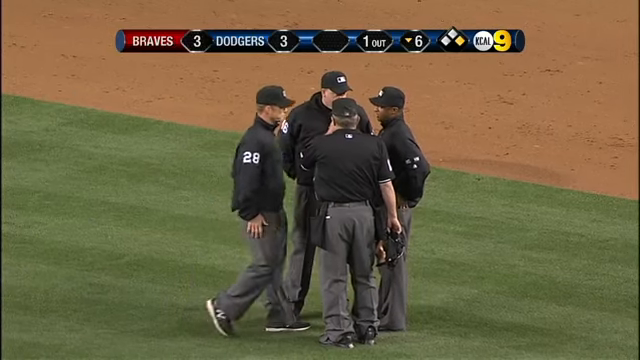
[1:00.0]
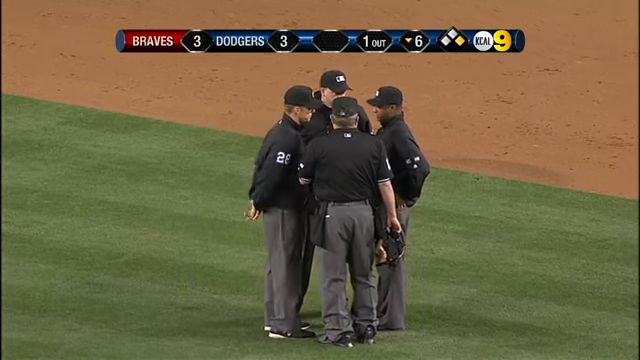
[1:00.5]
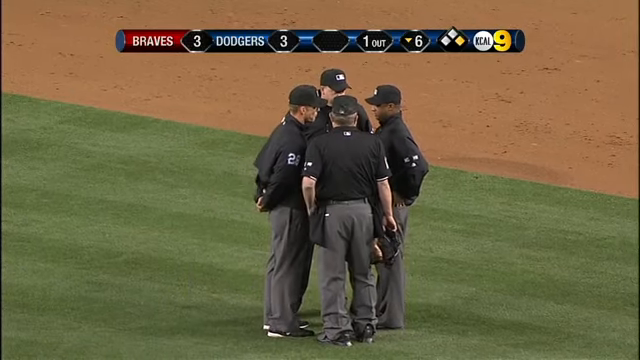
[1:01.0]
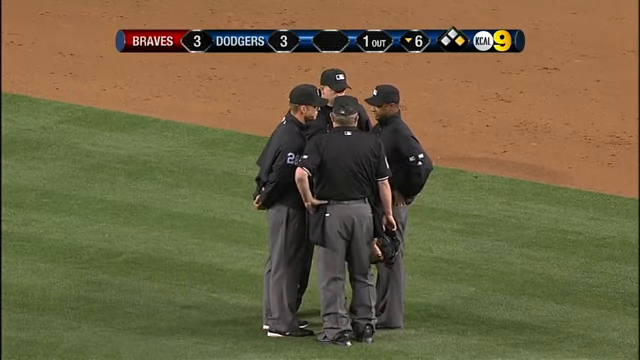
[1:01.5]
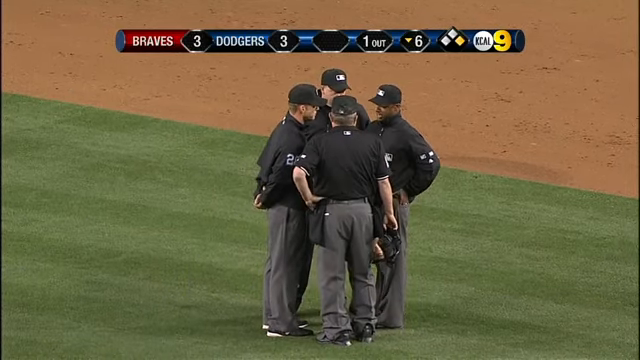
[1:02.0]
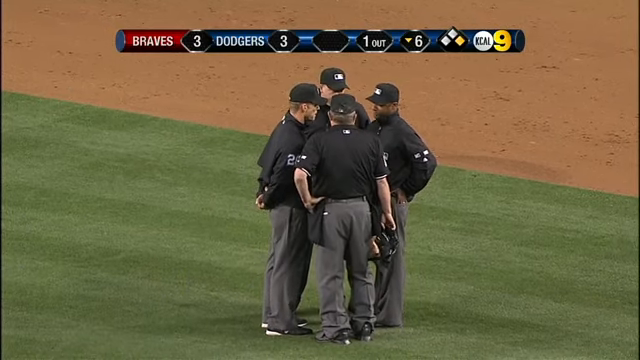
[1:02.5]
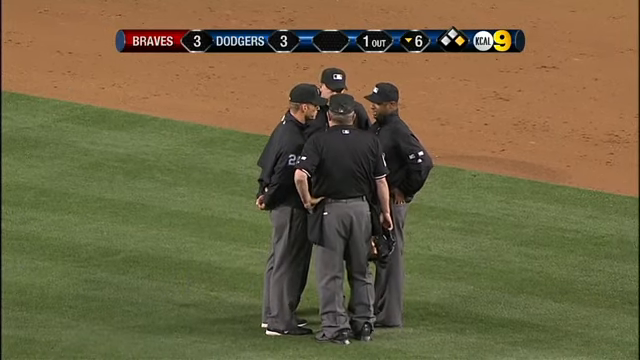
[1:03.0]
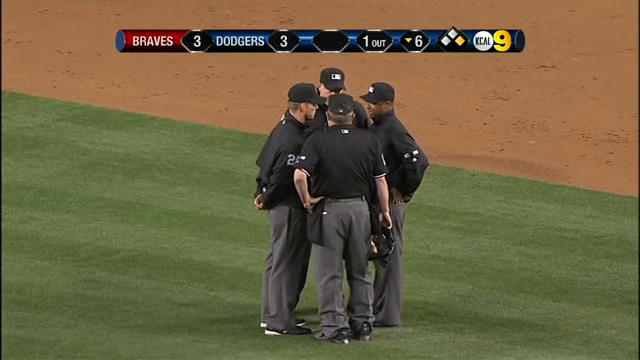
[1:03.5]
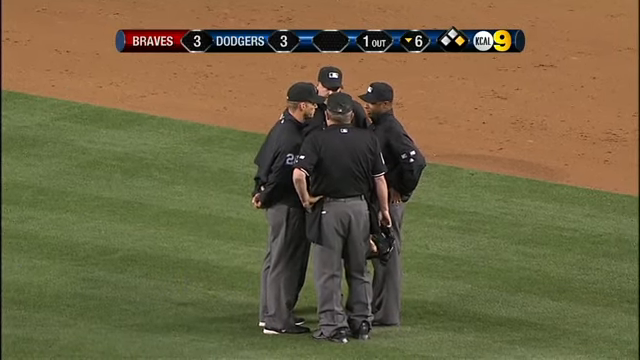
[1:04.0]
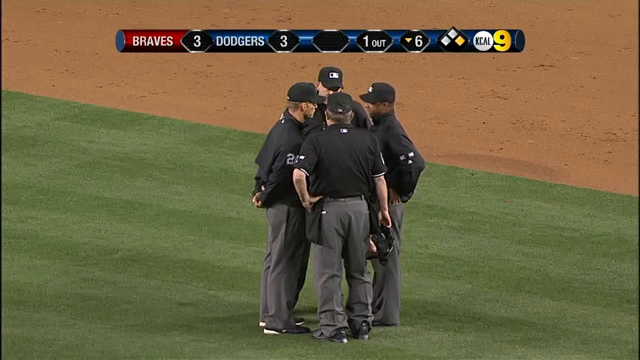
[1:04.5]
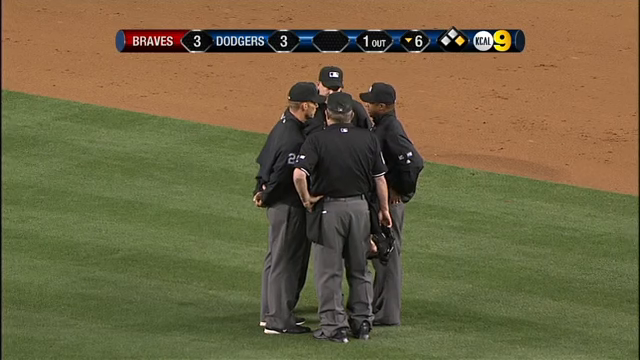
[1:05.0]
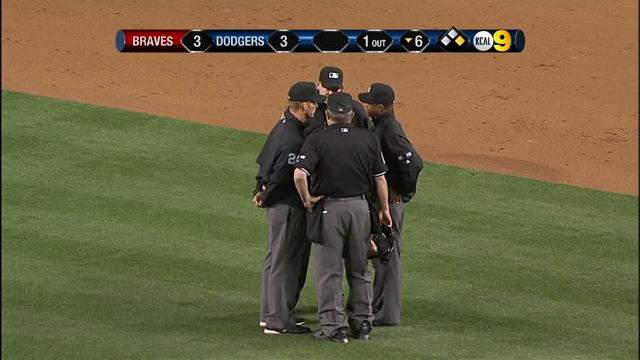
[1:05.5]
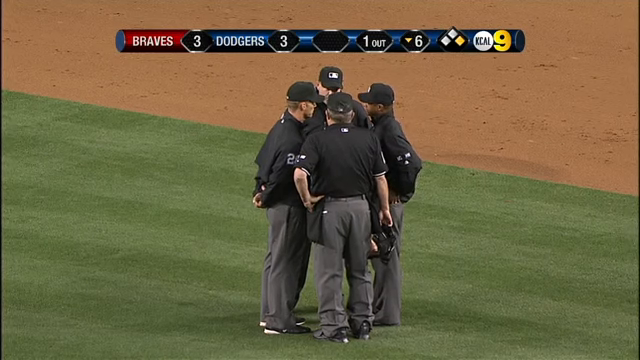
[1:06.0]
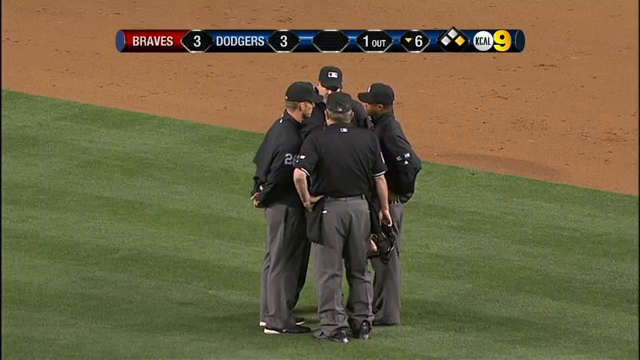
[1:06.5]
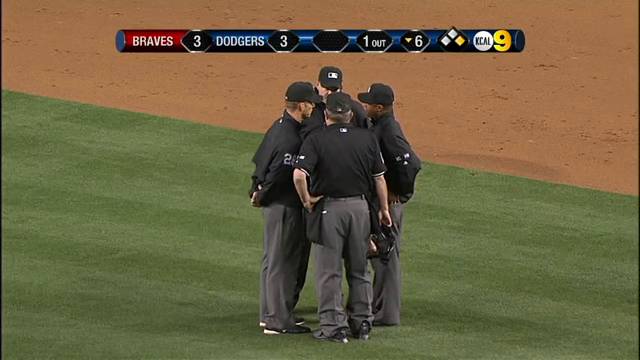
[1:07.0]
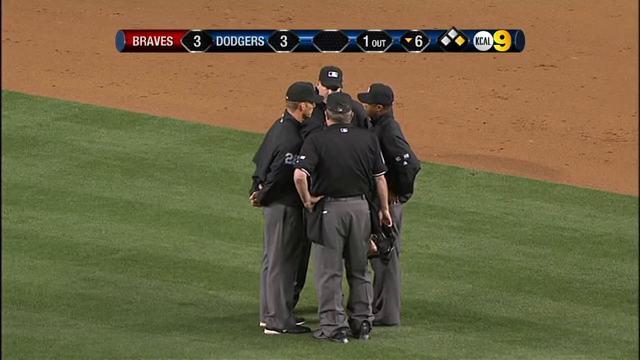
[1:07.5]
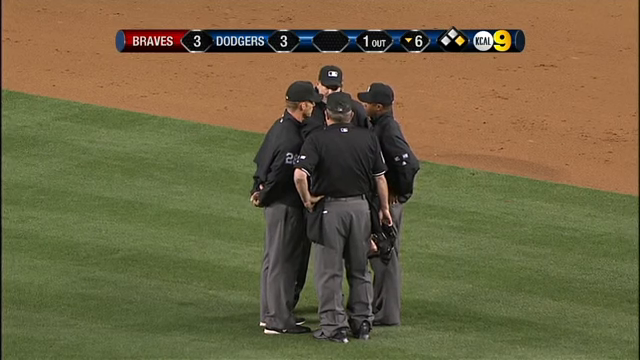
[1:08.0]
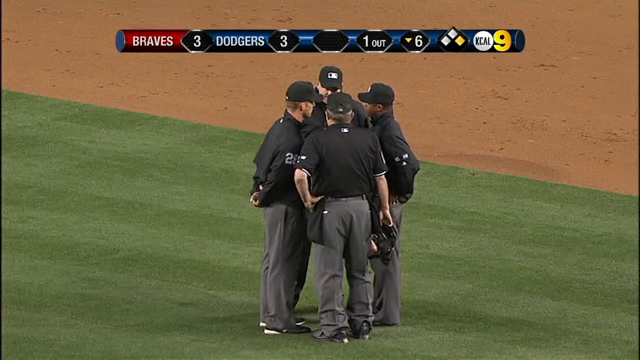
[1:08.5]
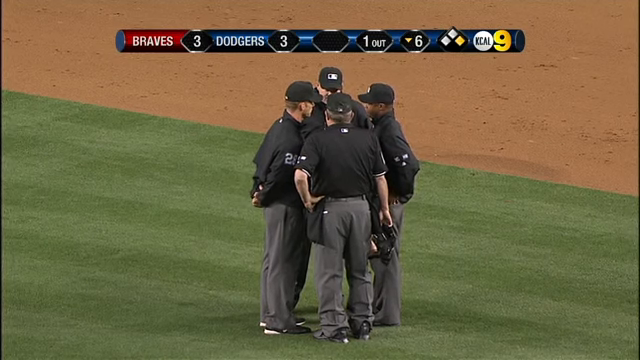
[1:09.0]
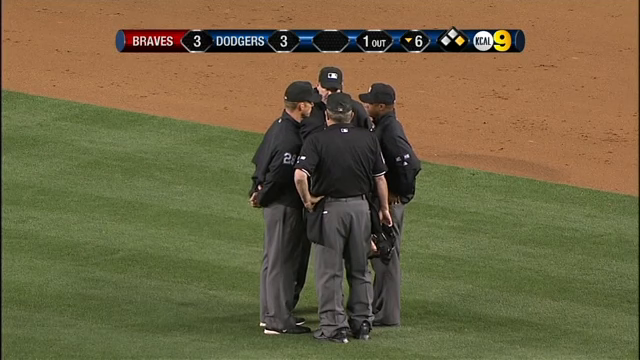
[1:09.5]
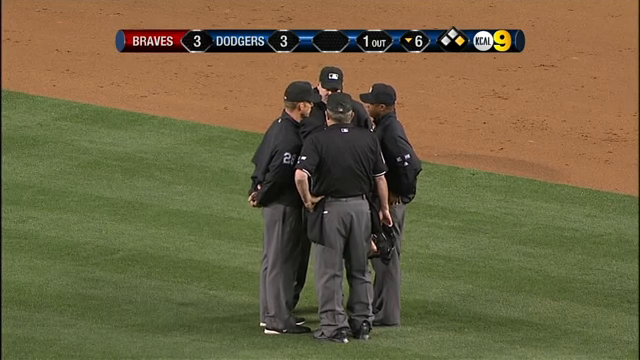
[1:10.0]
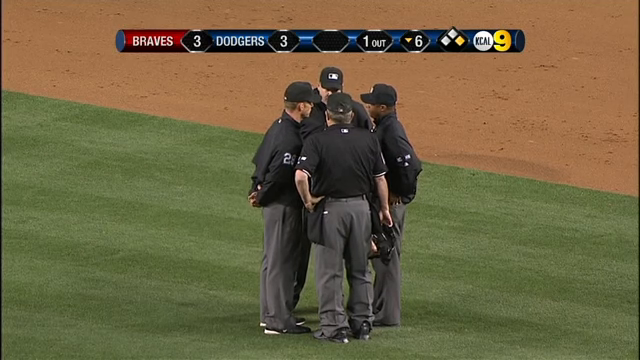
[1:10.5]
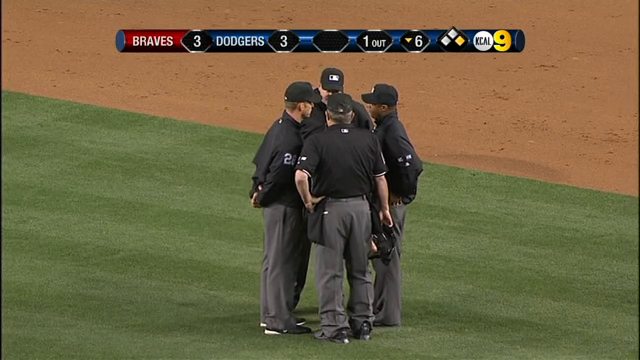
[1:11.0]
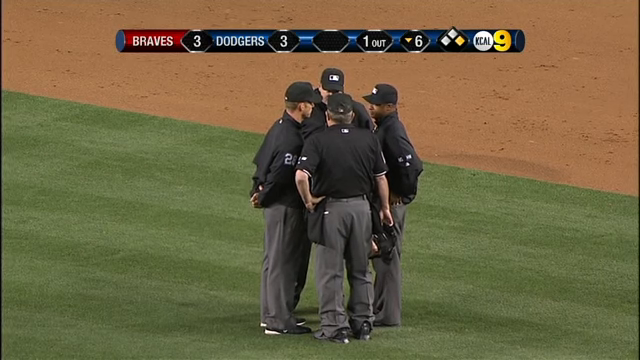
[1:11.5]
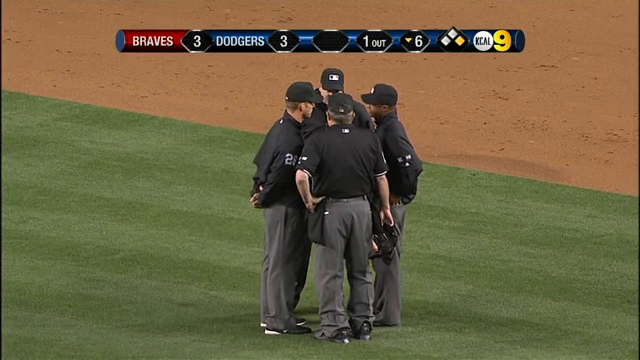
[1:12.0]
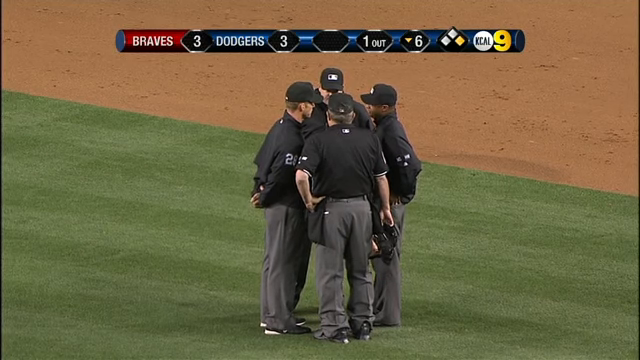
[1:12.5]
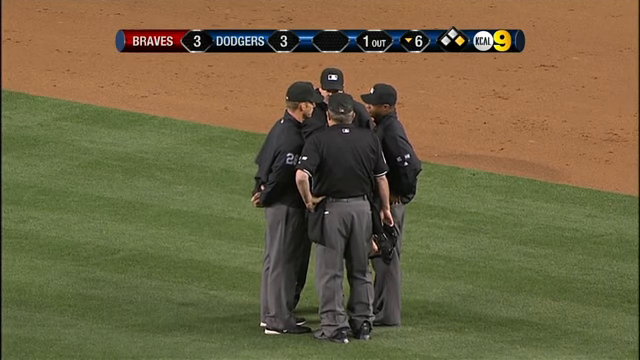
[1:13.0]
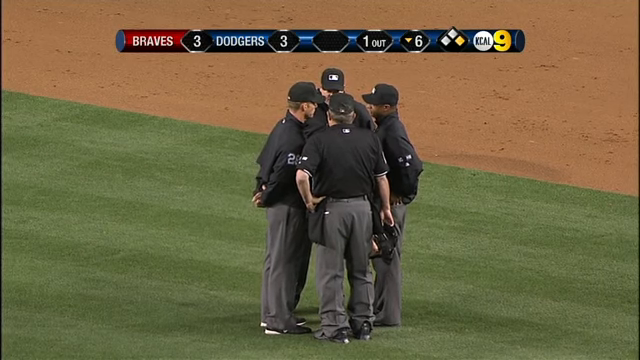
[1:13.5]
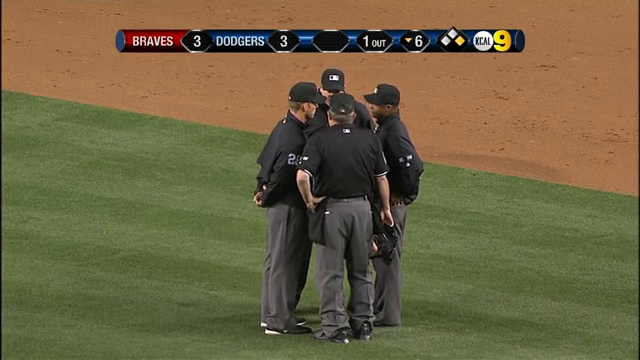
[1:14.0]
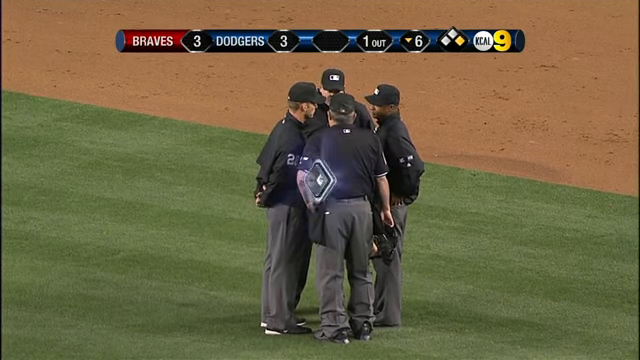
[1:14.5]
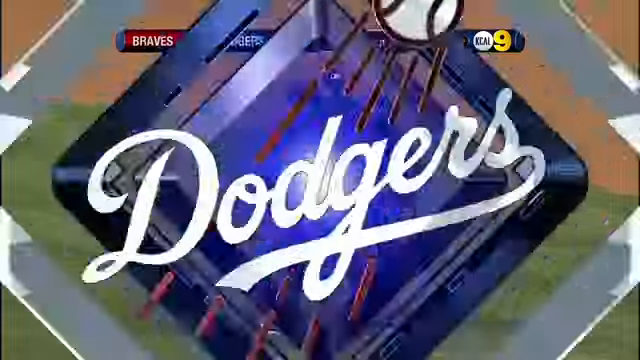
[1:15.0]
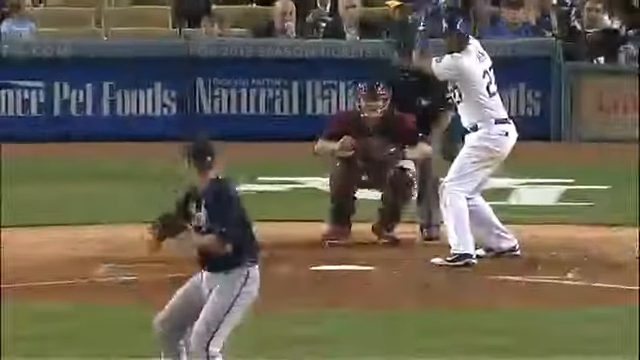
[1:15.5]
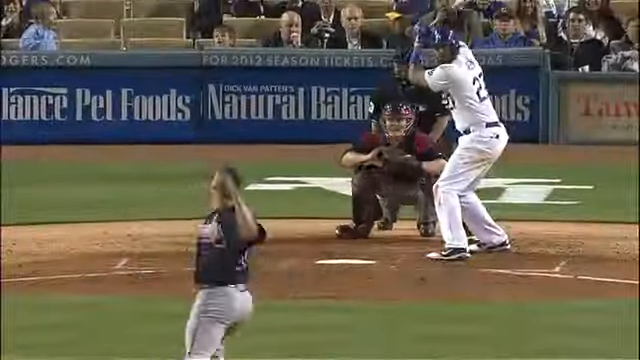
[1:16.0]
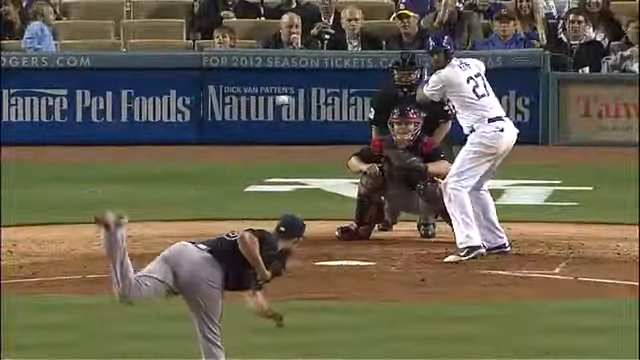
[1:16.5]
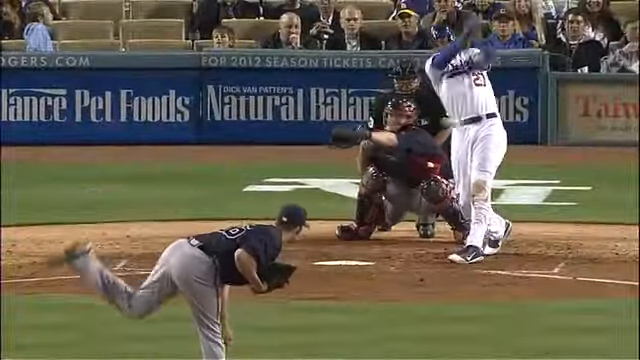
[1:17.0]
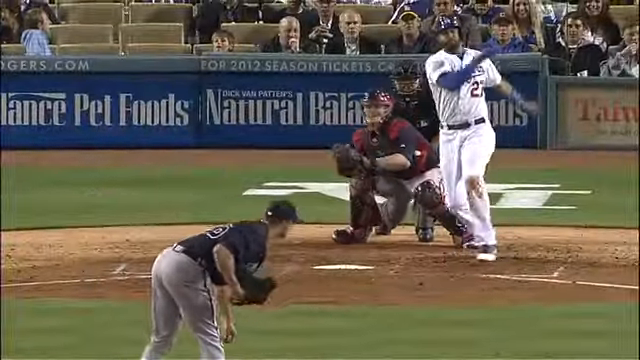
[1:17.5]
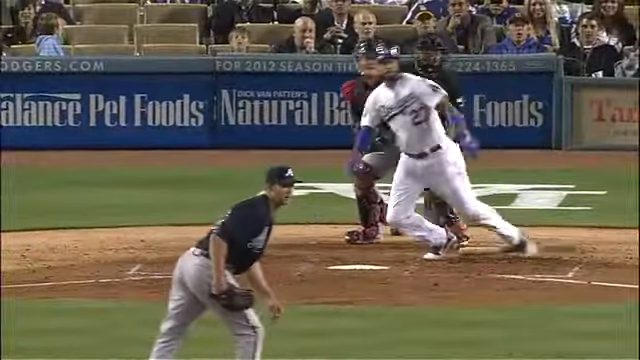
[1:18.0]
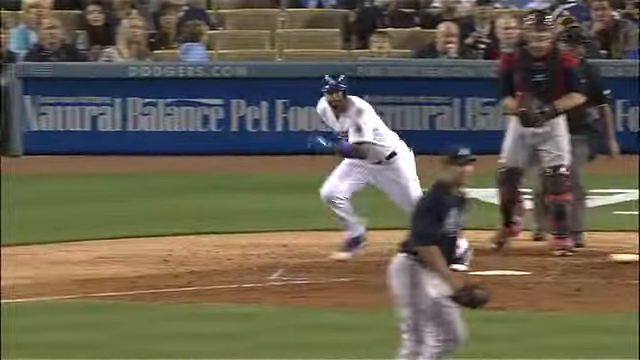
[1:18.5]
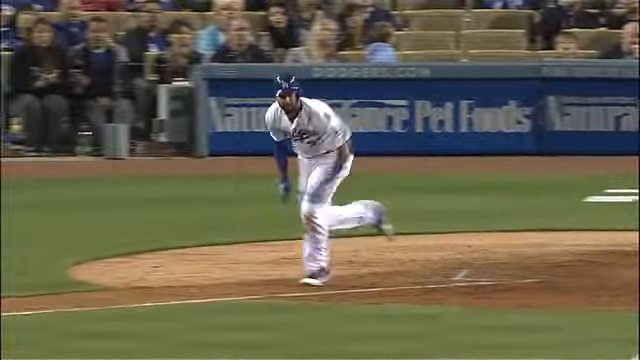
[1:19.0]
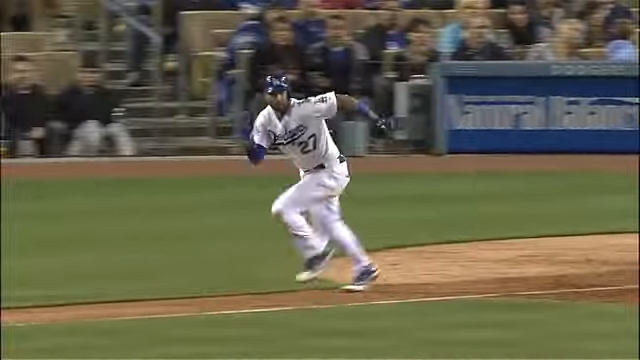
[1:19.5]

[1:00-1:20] A bar at the top shows Braves 3, Dodgers 3 in this MLB game, apparently with a runner on first, one out, and the bottom of the sixth. In the center of the field, four refs in black tops and gray pants stand huddled in one group. Some wear coats, and the one closest to the camera wears a t-shirt. They form roughly a diamond: one has his back to the camera, one faces the camera across from him, and two on the left and right face each other. They appear to be discussing a play that recently occurred and keep talking for a while, with the shot zoomed in on them and not moving. The background is divided by a diagonal line running from about 30% of the way down on the left to about 55% of the way down on the right, with dirt above it and the field below, suggesting the group is likely between first and second base. After a little while, a Dodgers logo takes over the screen as the video transitions to a new one.